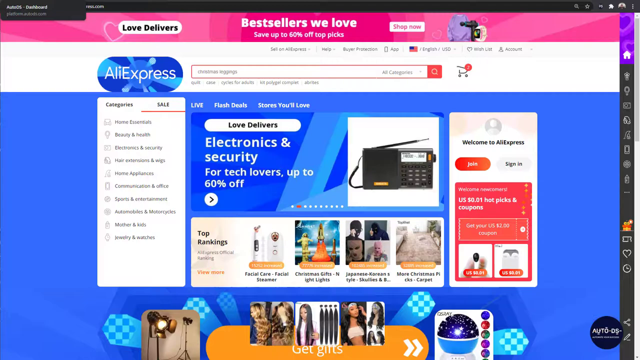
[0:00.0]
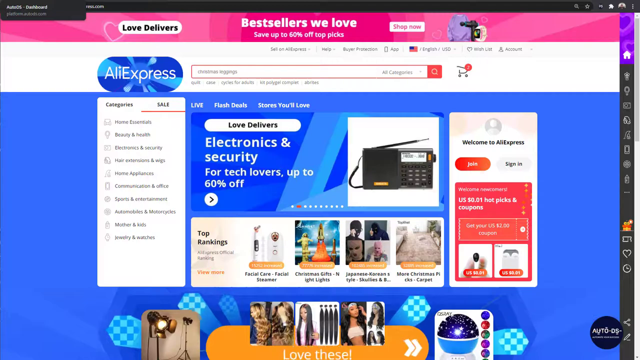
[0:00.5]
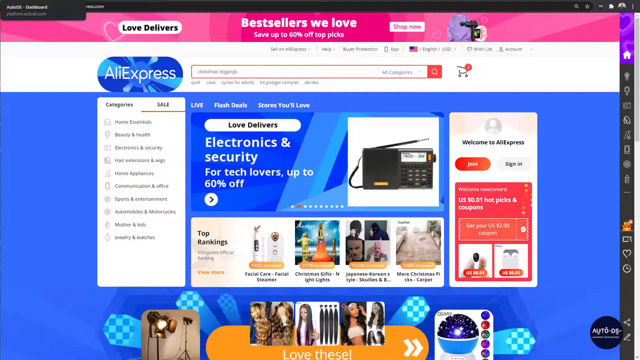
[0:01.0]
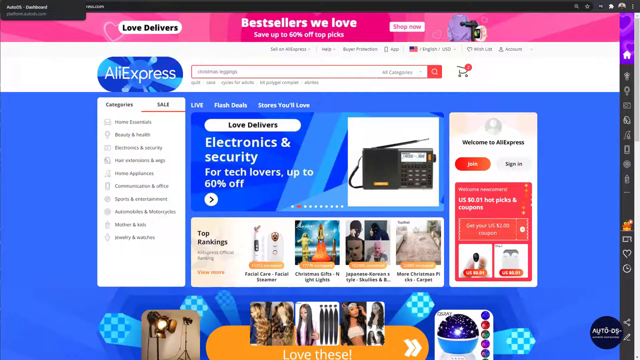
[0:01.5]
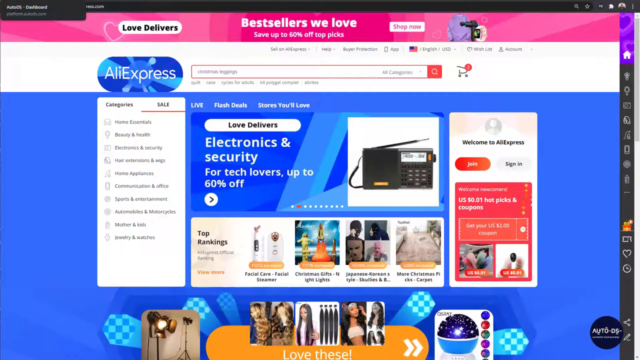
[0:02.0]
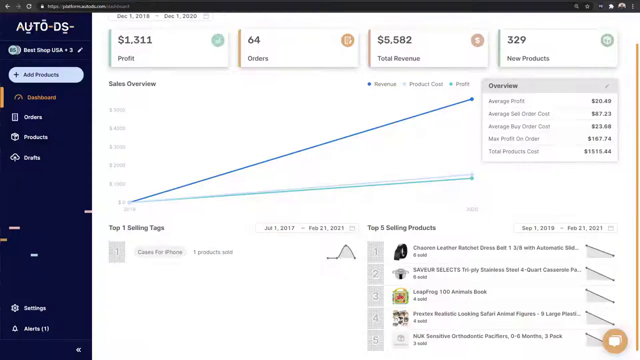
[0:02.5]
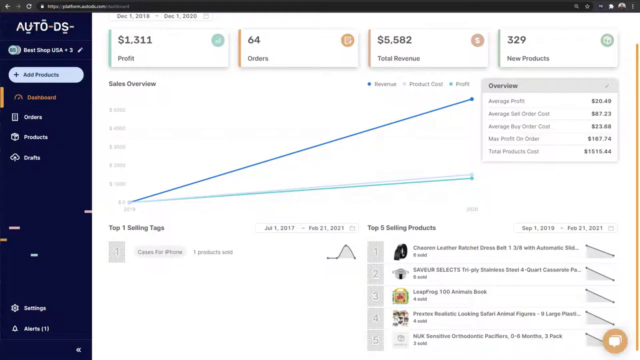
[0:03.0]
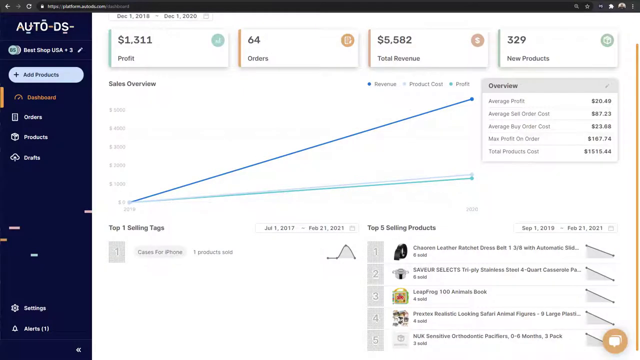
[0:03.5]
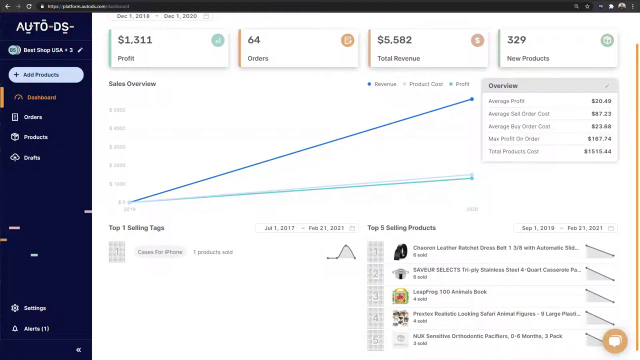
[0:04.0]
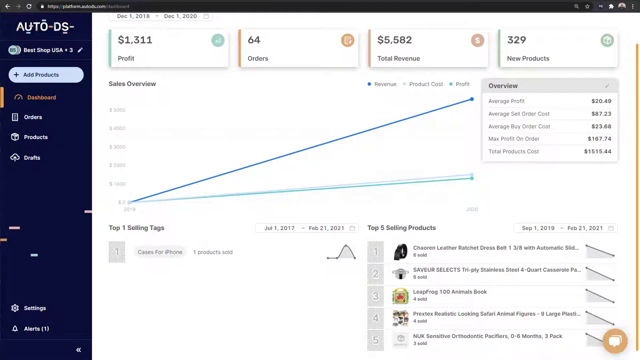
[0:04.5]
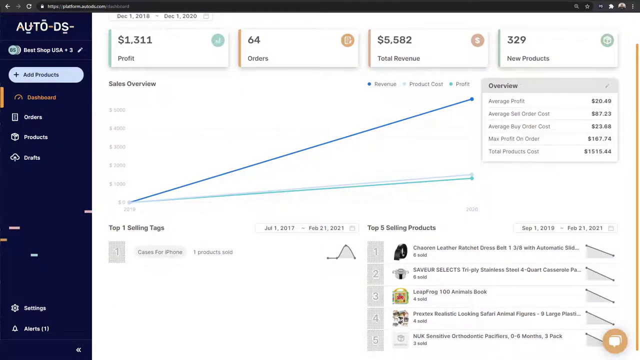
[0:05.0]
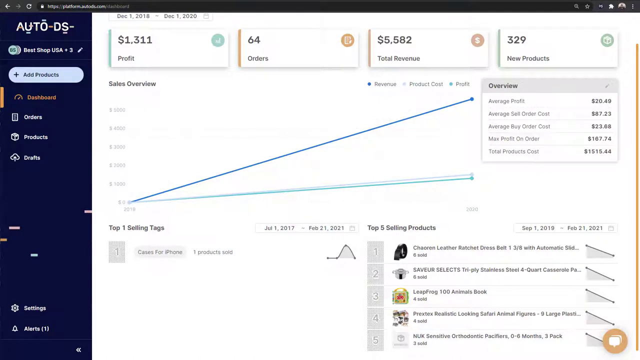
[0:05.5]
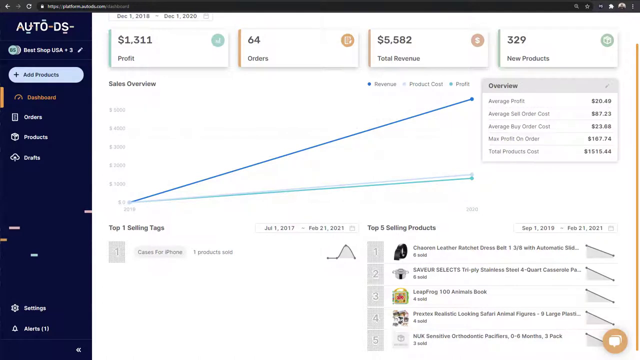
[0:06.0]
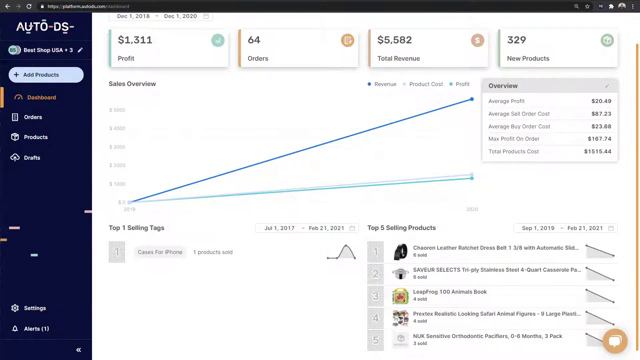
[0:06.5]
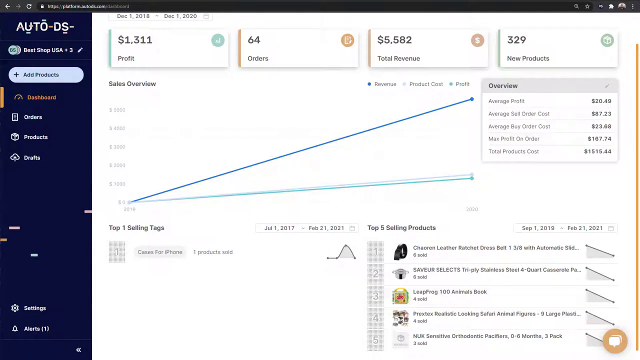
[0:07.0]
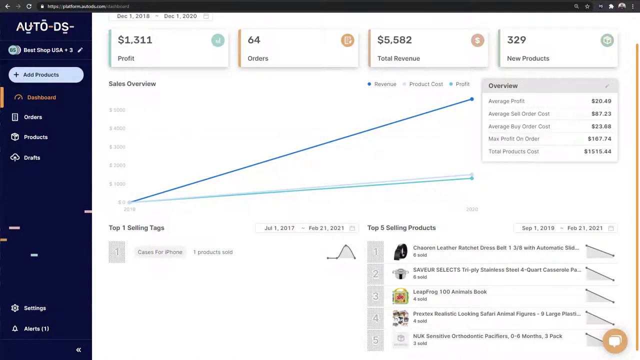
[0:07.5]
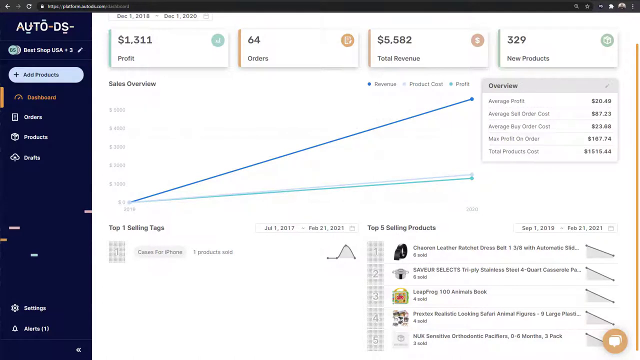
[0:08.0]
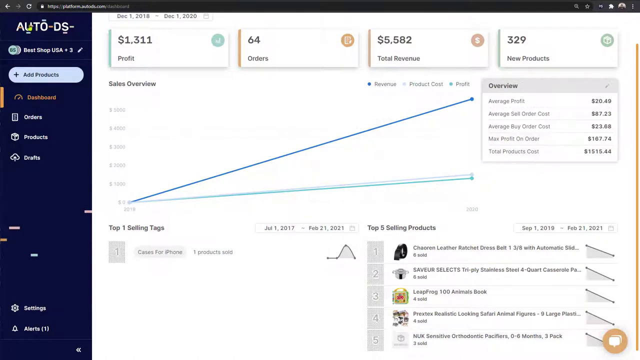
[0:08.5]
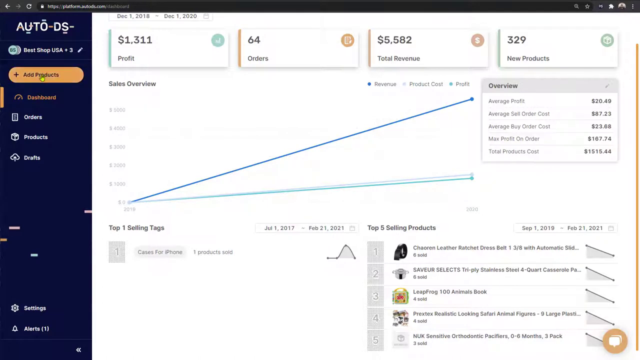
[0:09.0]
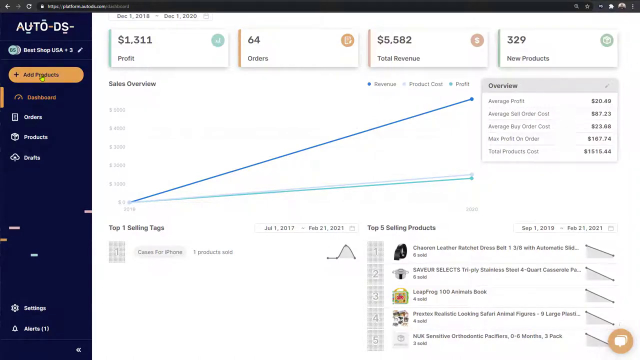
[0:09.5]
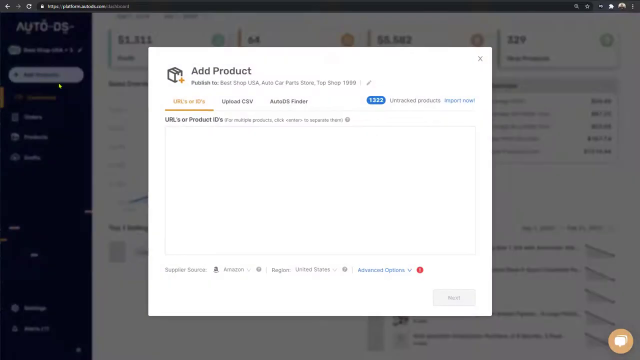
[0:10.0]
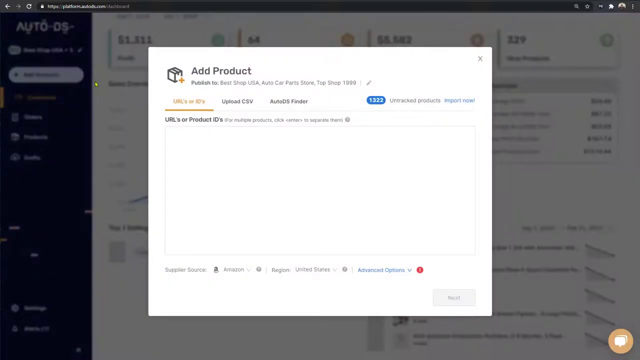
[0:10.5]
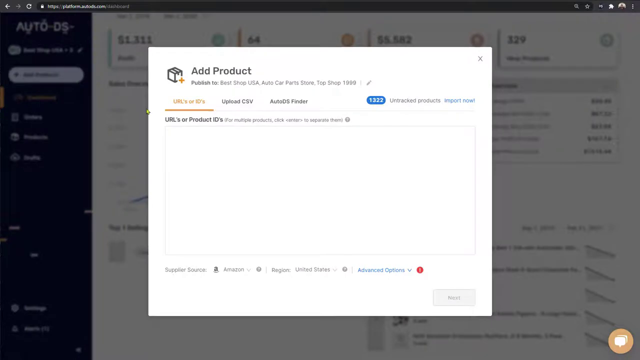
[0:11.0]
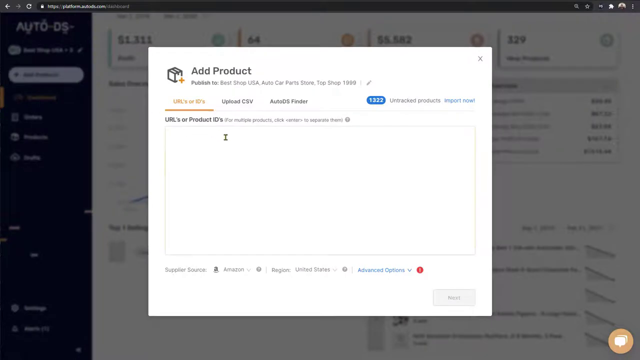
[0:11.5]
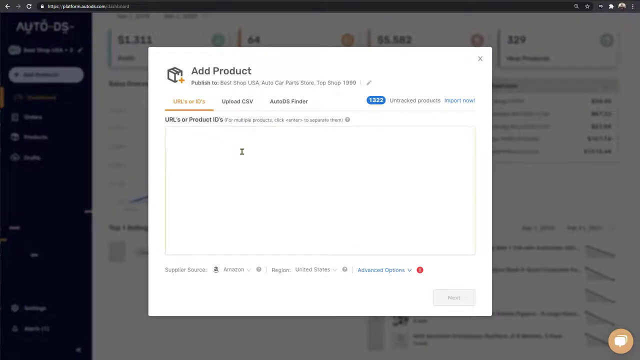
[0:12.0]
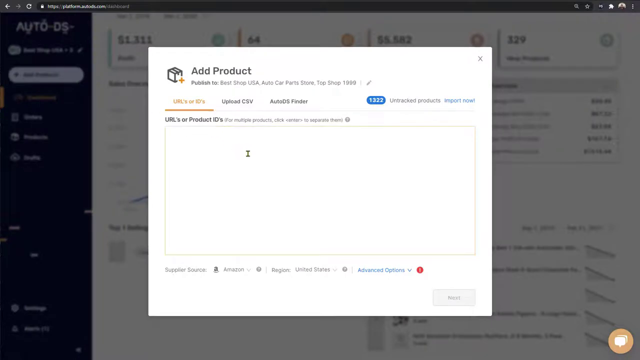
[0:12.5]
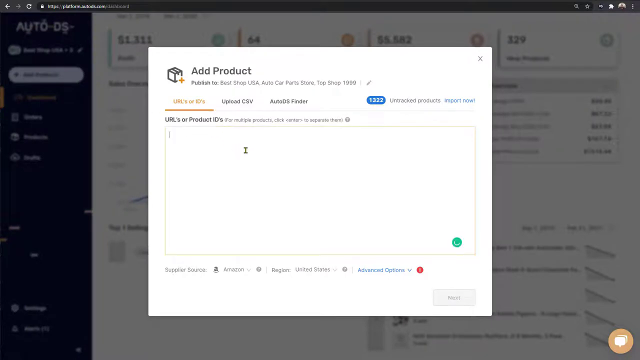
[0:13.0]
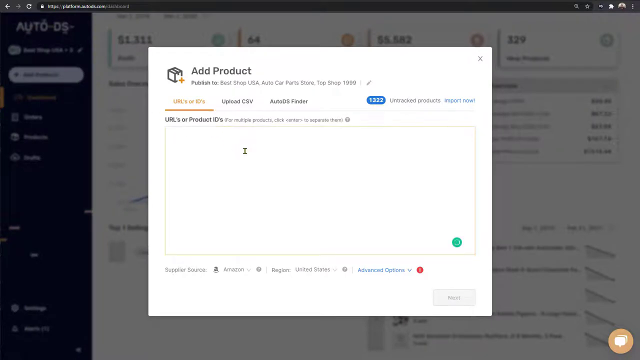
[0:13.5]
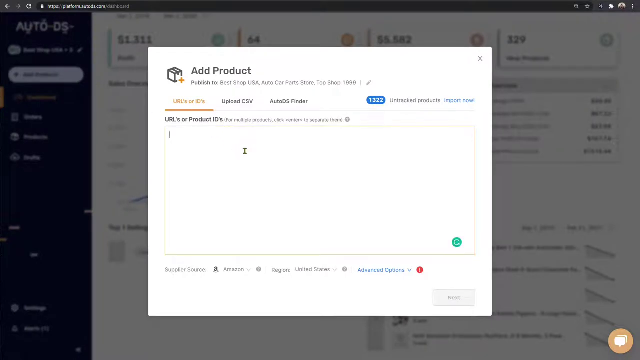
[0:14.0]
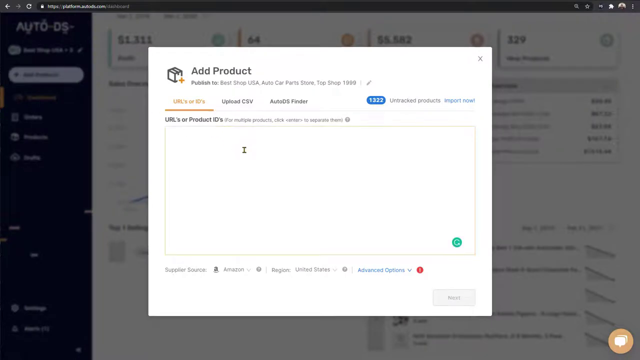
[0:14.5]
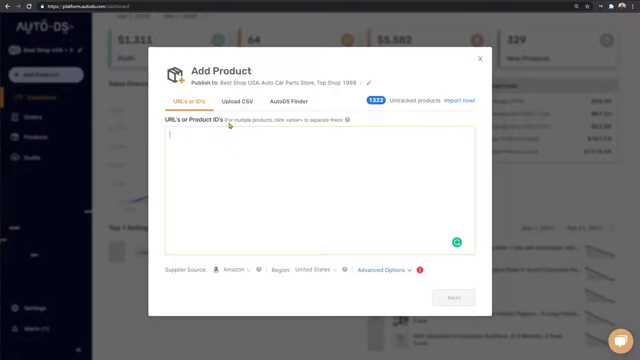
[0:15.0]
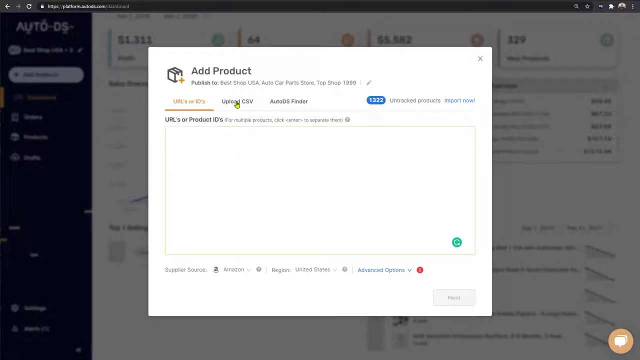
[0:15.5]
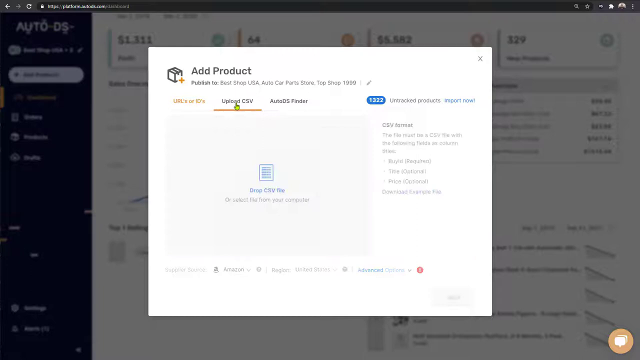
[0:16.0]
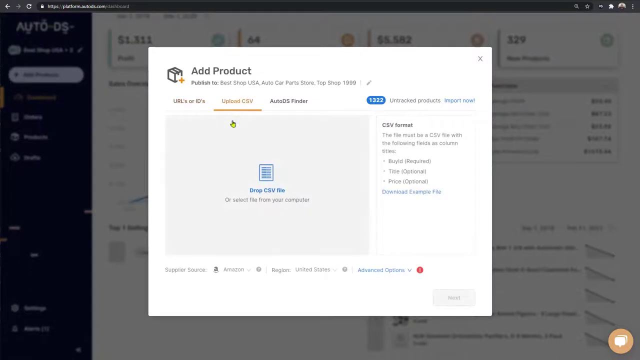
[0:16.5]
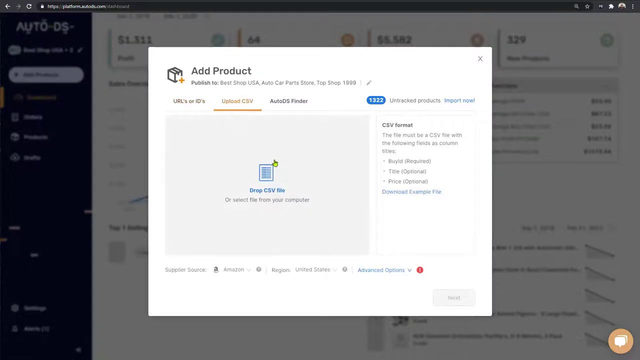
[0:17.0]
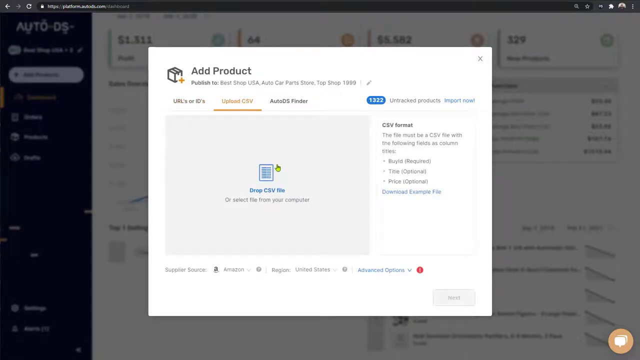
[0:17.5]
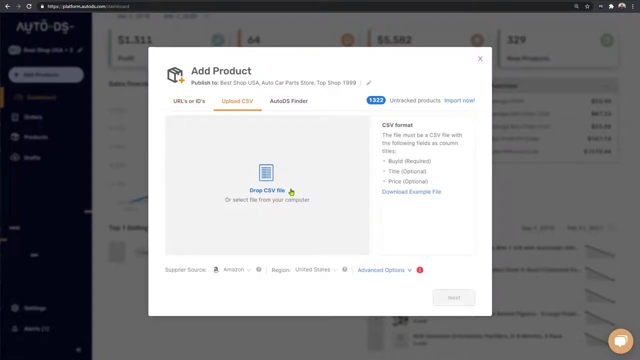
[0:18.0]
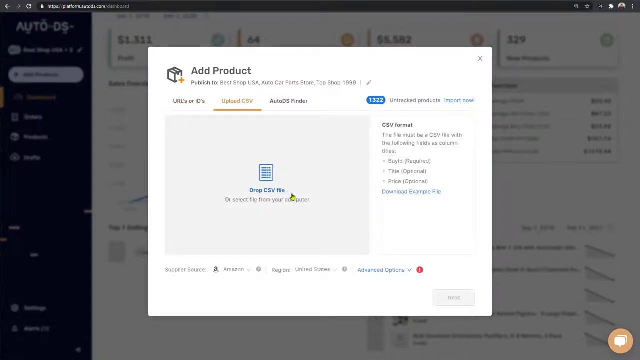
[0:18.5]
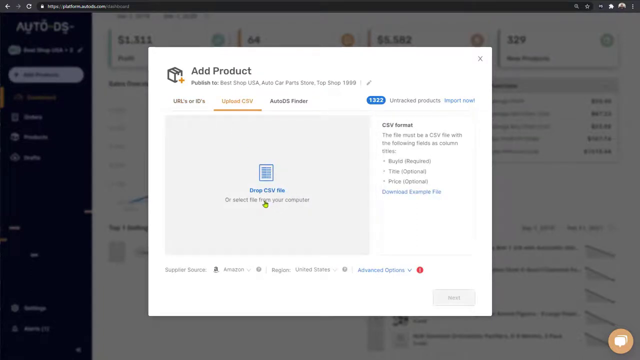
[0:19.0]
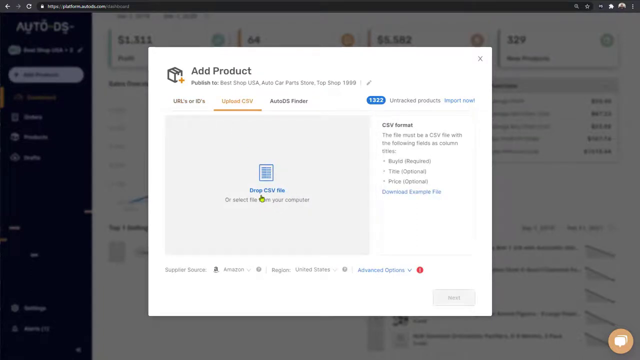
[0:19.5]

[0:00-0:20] The video opens on AliExpress. Near the top left there is white text, and above it the text "love deliverers" appears. At the top in the middle, white text reads "best sellers we love." One of the advertised categories reads "electronics and security for tech lovers up to $0.64." Some charts then appear, apparently showing sales from an AliExpress account. At the bottom, text reads "top selling products," listing items such as a leather belt and a Leapfrog 100 animals book, among other things. The data covers September 1st 2019 to February 21st 2021, with an average profit of $20.49, revenue of 5,582 and profit of 1,311. The person then clicks on a section to add a product, and the word "upload" appears.